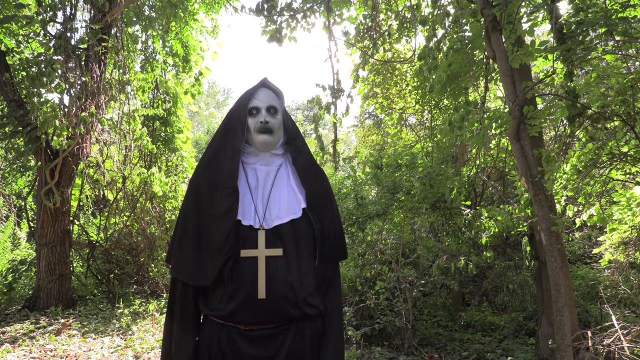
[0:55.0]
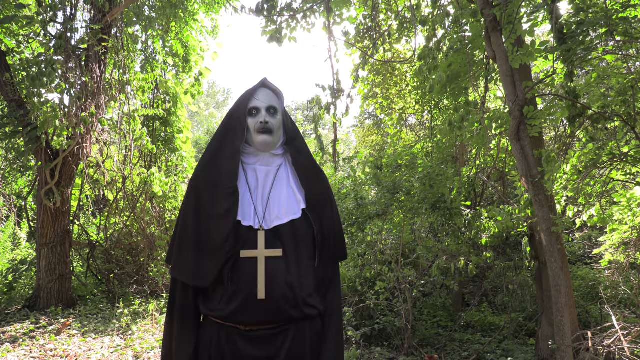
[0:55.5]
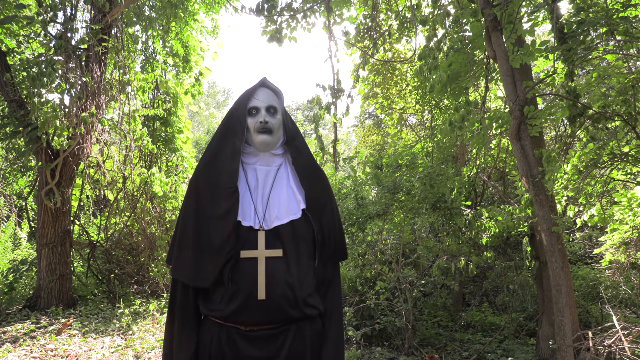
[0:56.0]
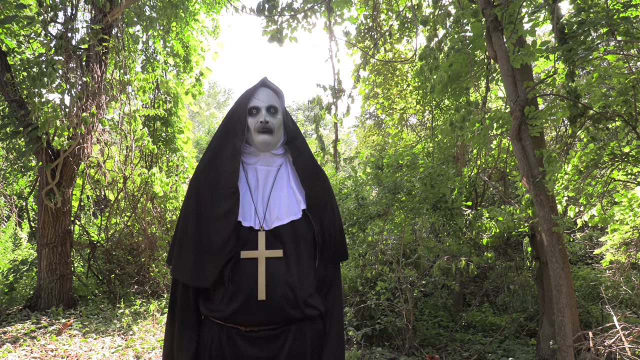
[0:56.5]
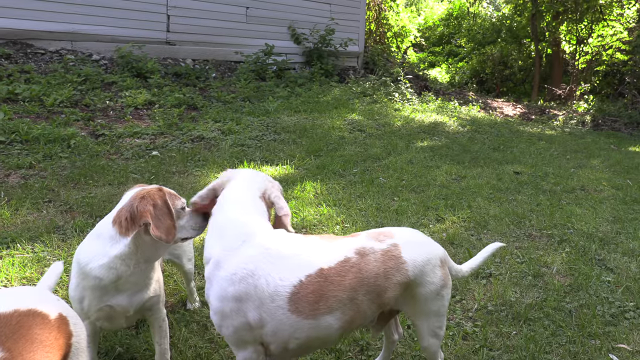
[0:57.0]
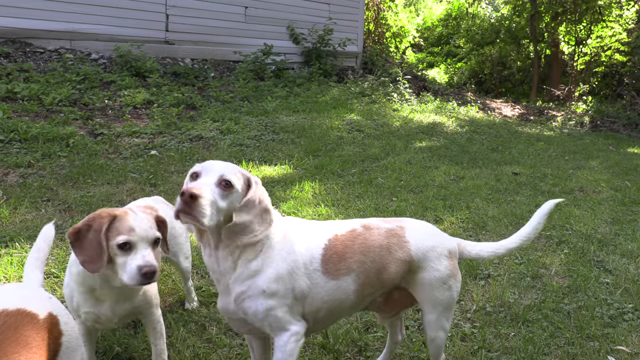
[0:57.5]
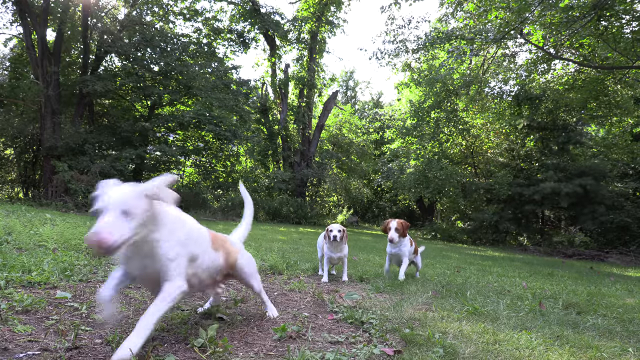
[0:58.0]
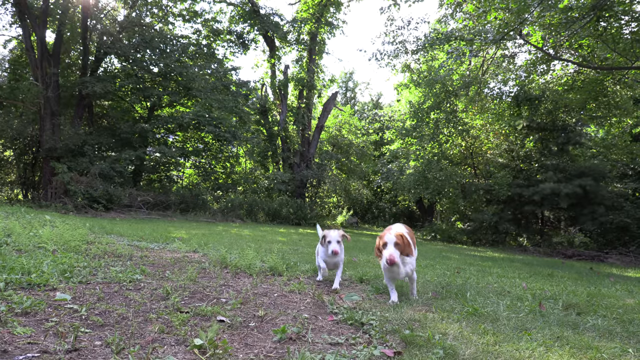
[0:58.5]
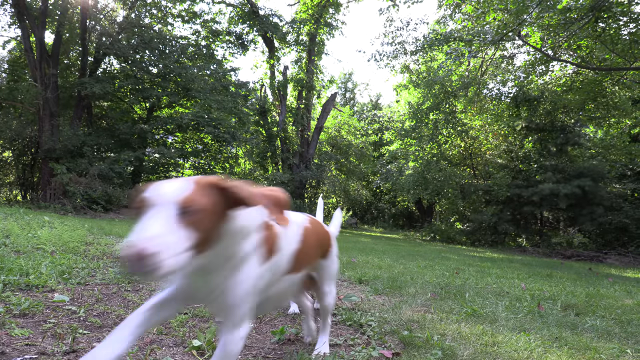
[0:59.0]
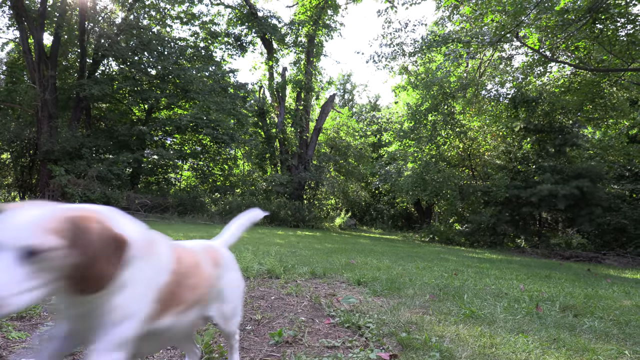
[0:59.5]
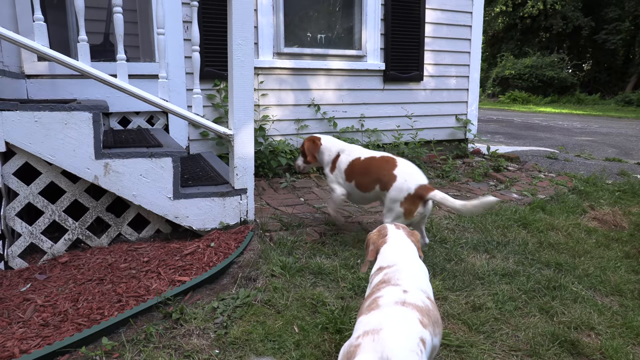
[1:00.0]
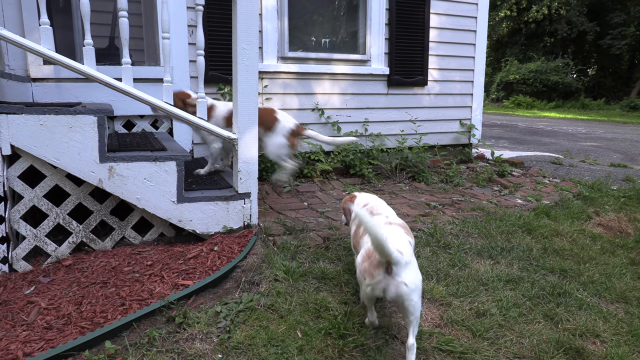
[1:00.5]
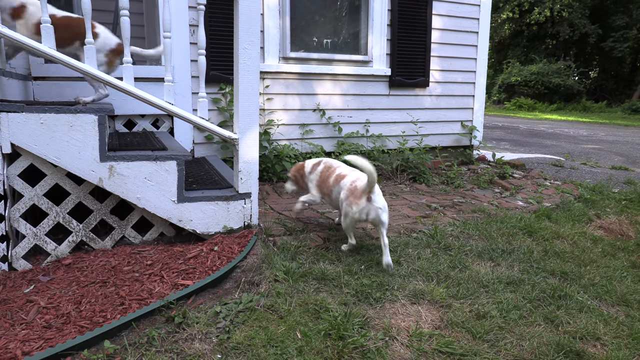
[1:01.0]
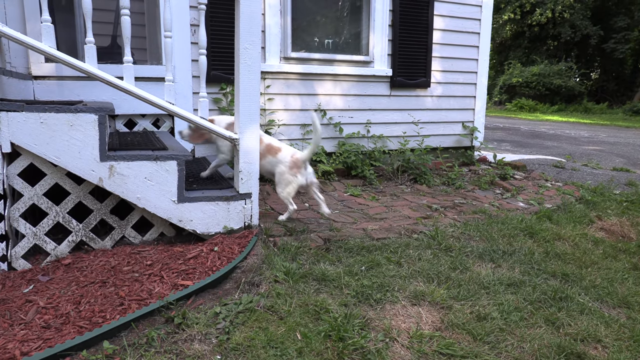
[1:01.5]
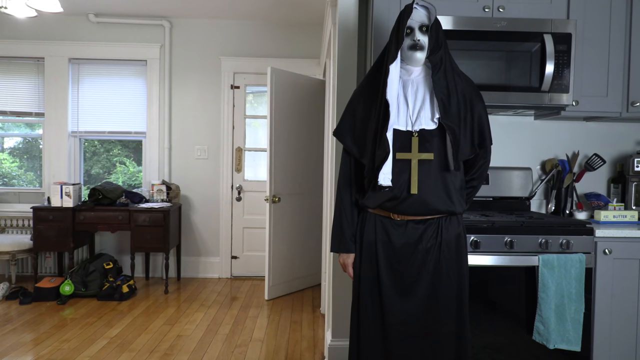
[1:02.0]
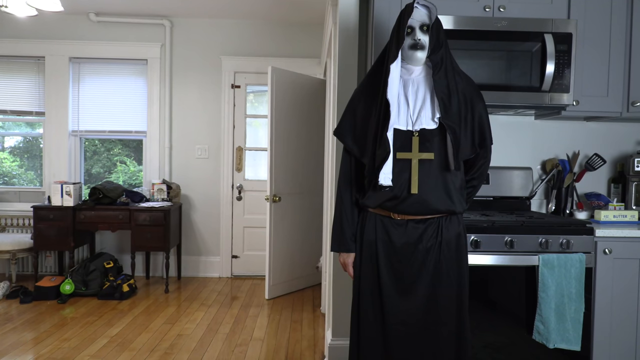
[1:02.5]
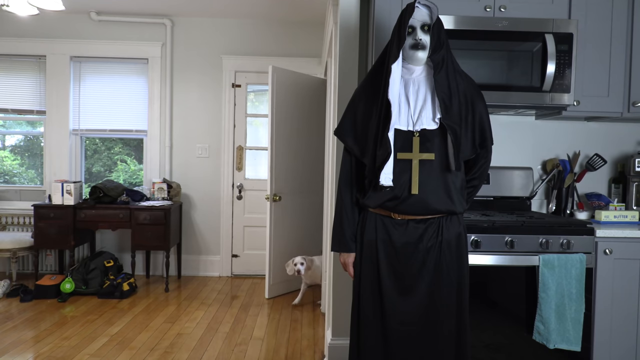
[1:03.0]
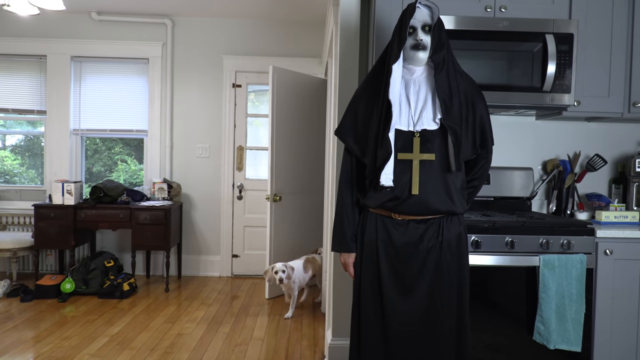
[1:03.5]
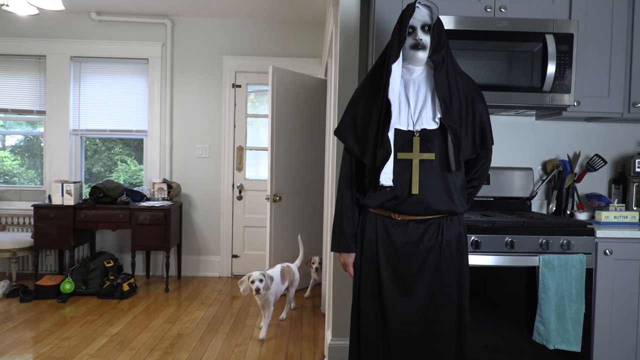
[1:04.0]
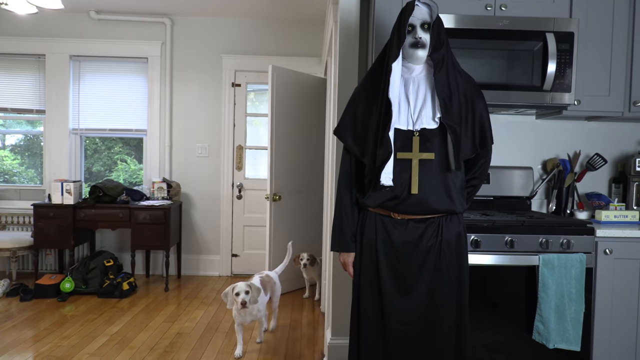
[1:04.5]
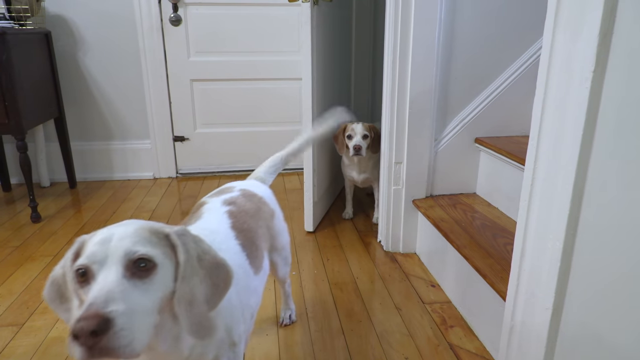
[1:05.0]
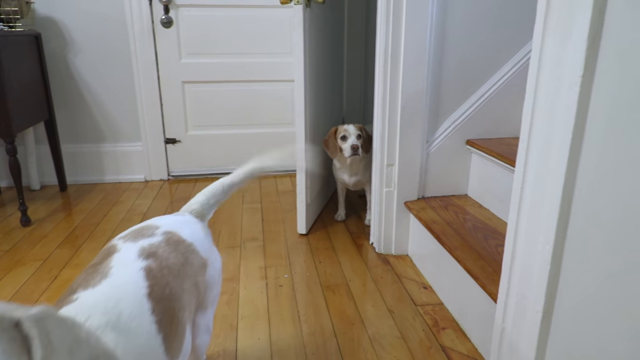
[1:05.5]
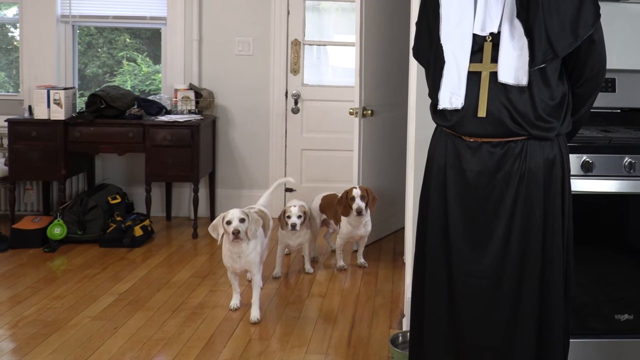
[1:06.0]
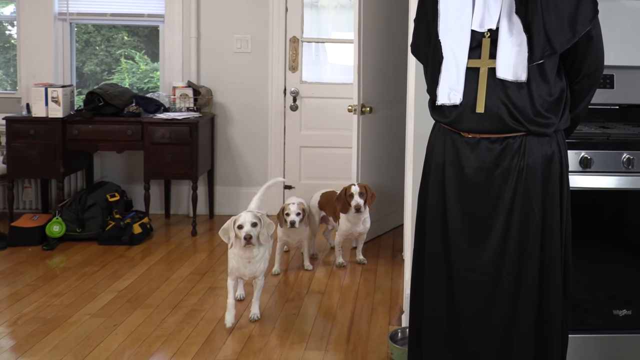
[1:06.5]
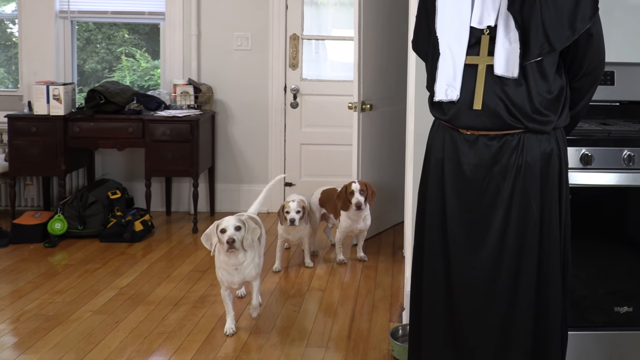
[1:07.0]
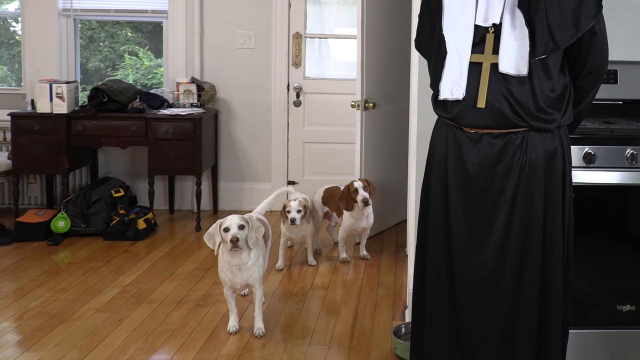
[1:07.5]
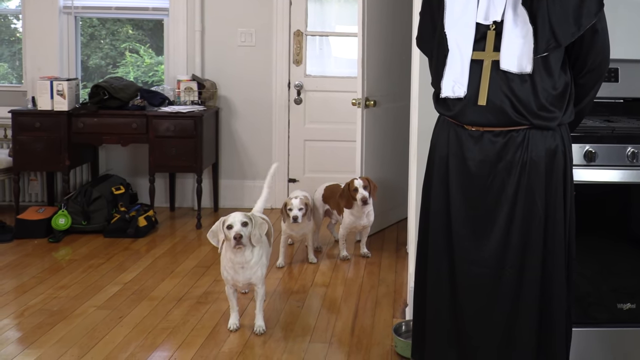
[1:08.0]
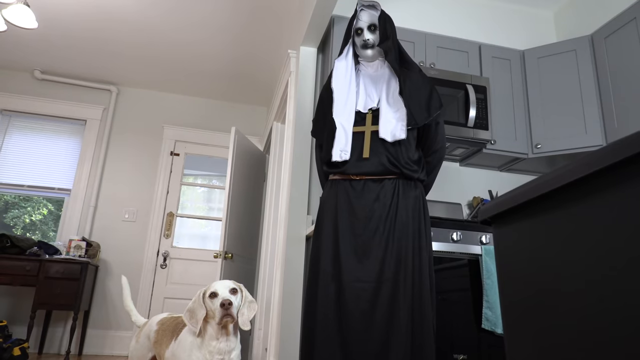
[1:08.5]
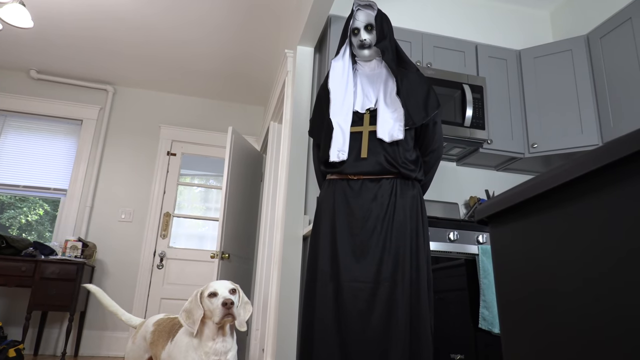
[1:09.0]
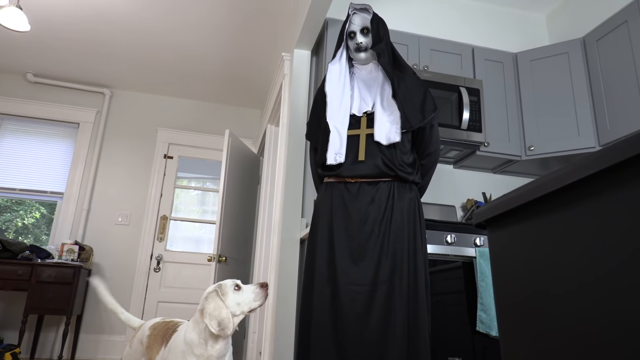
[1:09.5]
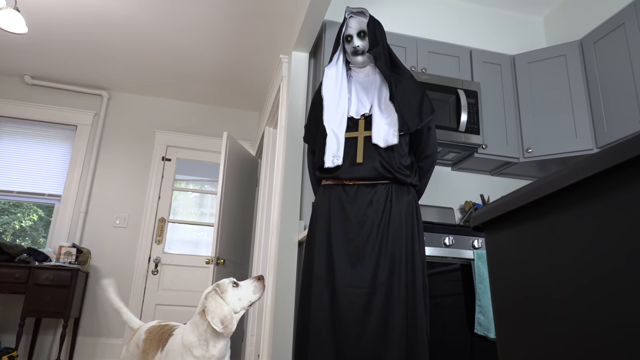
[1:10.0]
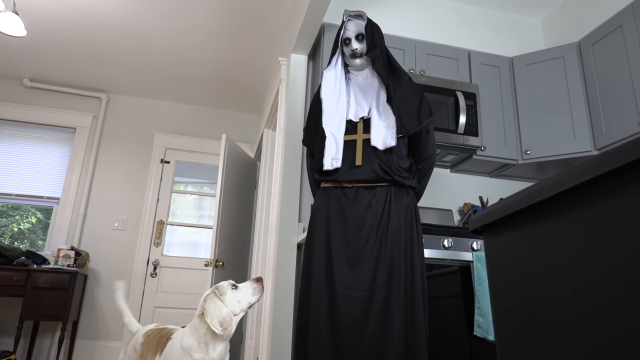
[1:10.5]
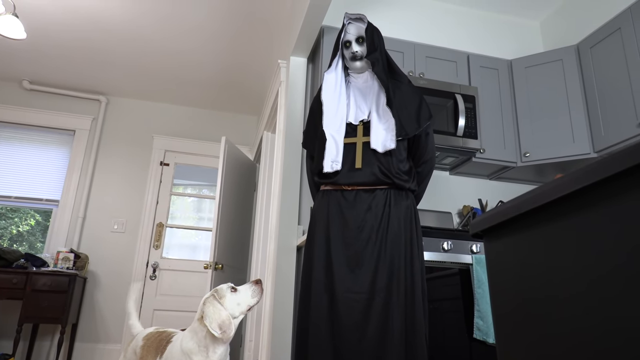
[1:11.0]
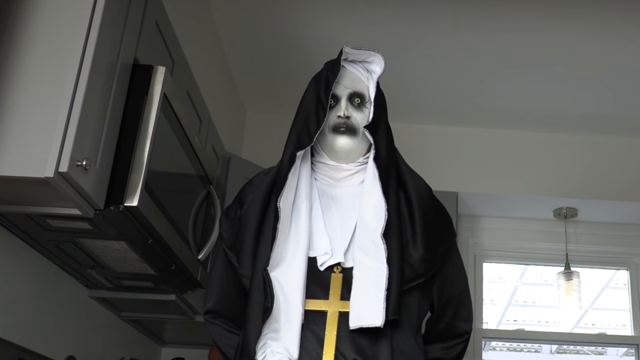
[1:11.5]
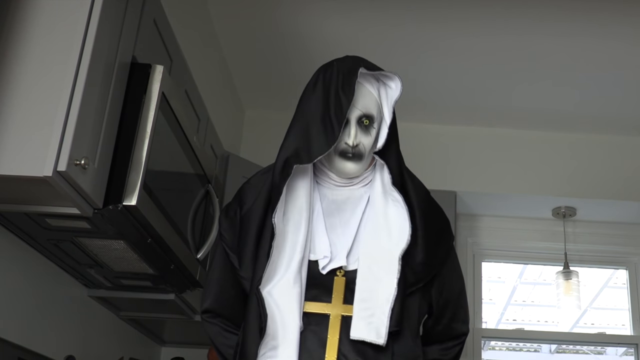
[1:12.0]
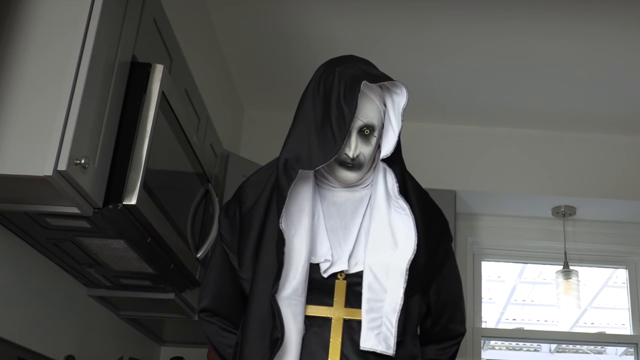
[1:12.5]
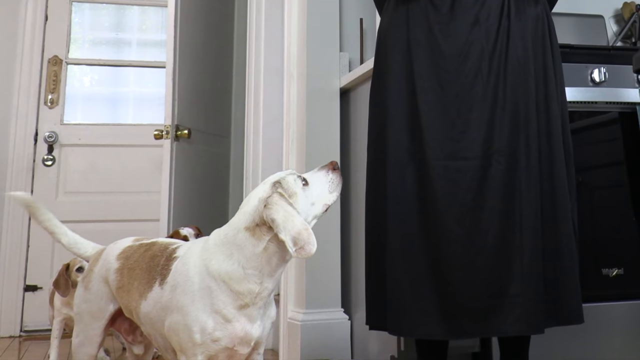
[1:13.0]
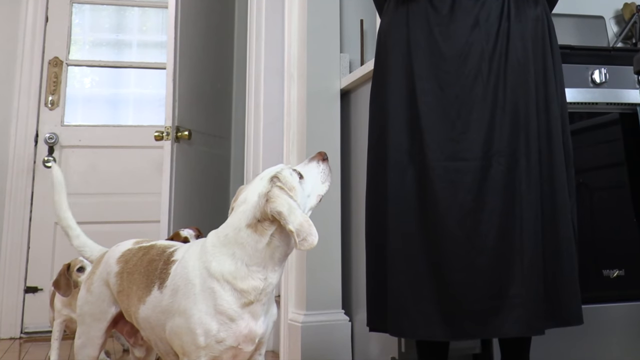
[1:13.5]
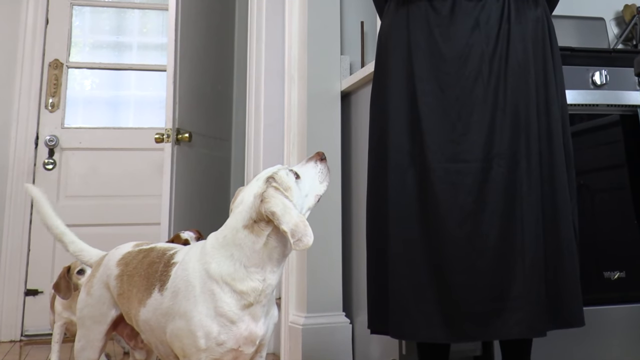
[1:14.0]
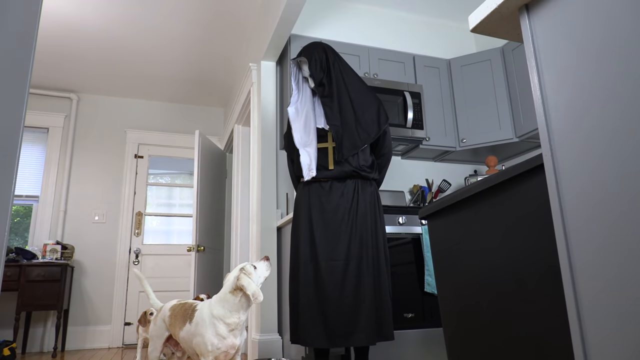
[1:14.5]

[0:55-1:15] The nun stands in the forest entrance of the backyard. Two dogs, one with white ears and one with brown ears, look at the demon nun. Then they look away, and three dogs run up the staircase back into the house, the leading one white with white ears. The demon nun is sort of hiding in the kitchen against the stove. The dogs slowly enter and look around, with the one in front leading the way. The dog enters the kitchen, looks up and sees the nun looking down at him, and they continue to look at each other.